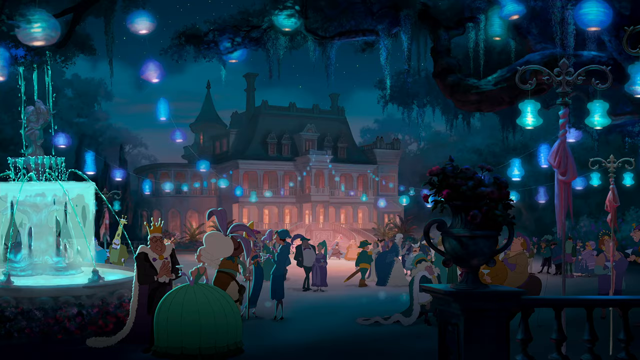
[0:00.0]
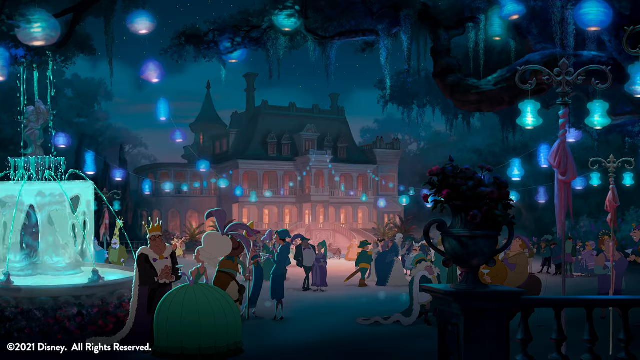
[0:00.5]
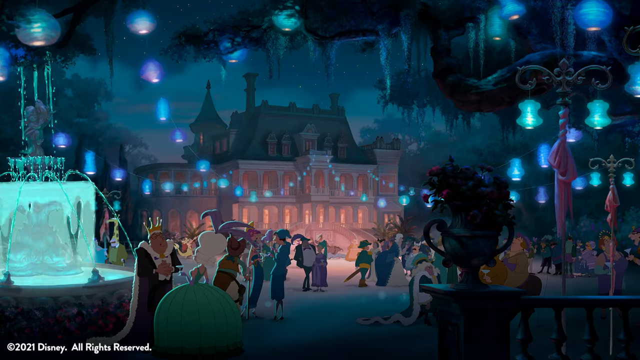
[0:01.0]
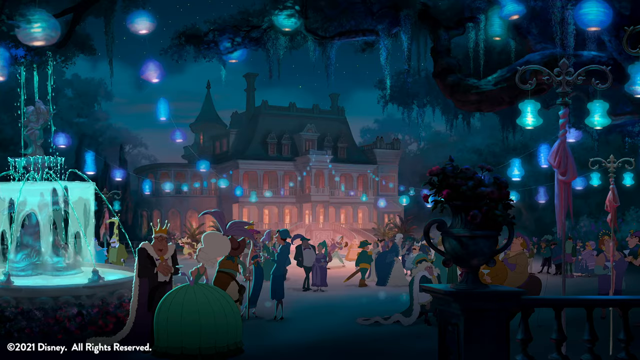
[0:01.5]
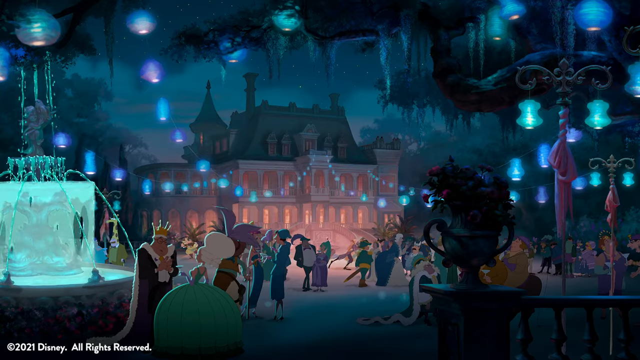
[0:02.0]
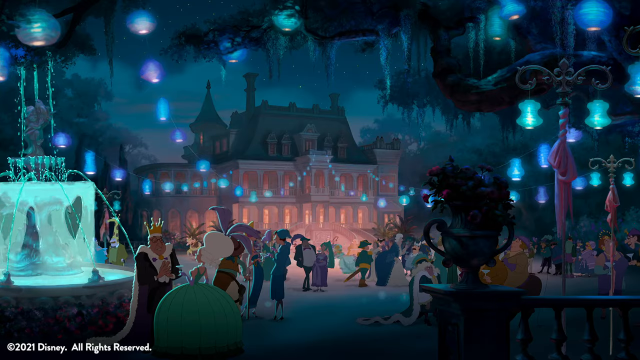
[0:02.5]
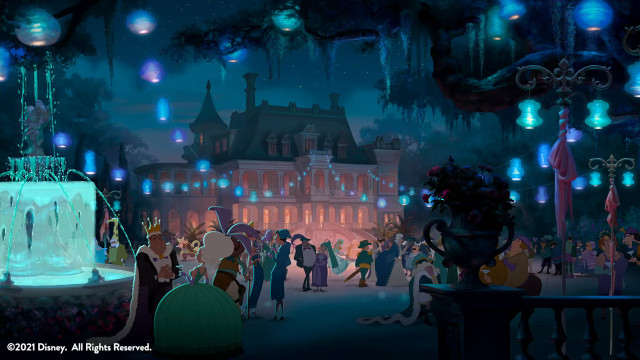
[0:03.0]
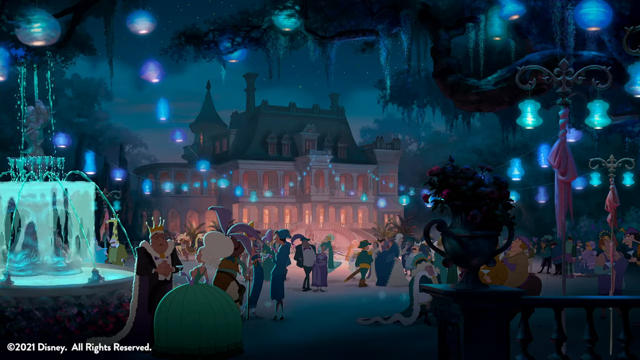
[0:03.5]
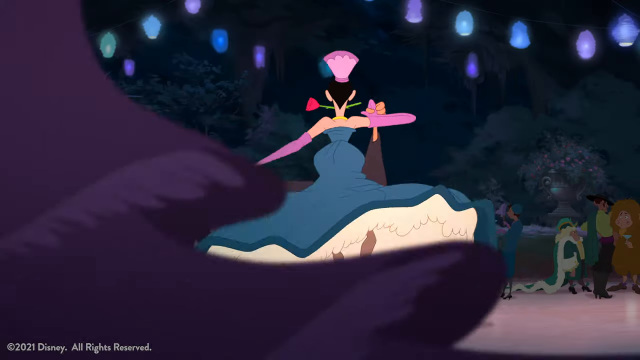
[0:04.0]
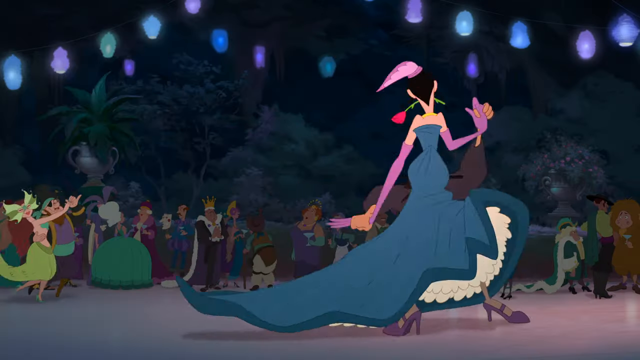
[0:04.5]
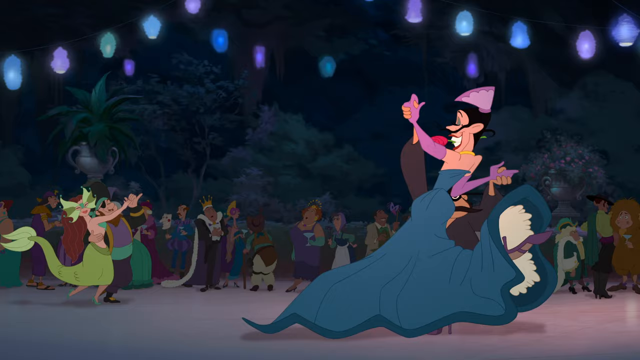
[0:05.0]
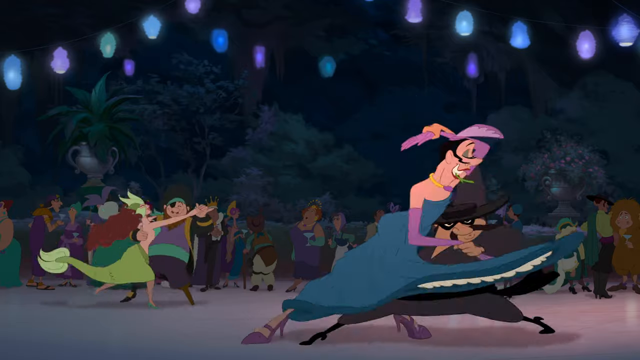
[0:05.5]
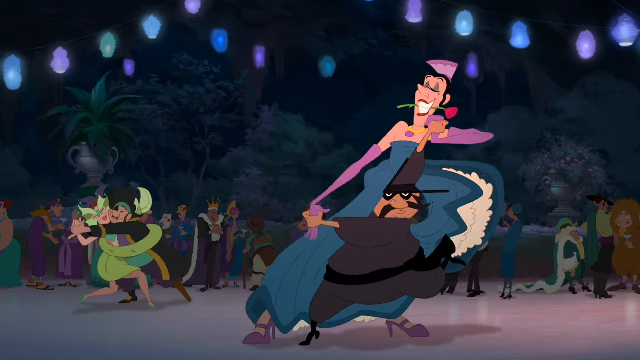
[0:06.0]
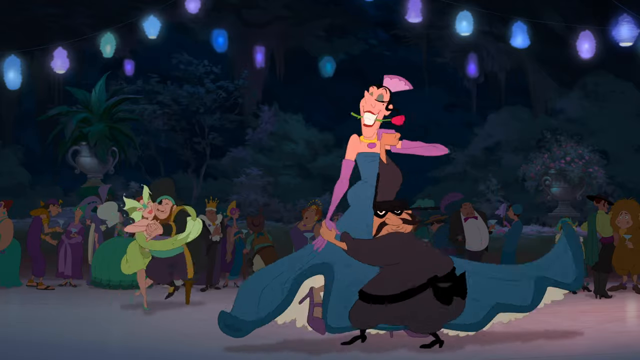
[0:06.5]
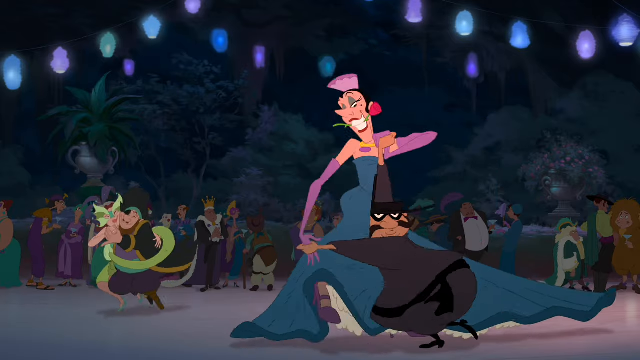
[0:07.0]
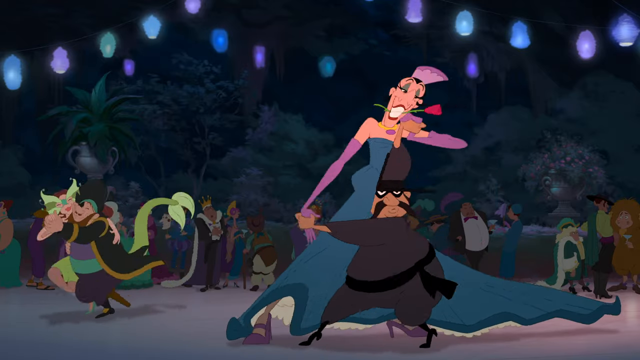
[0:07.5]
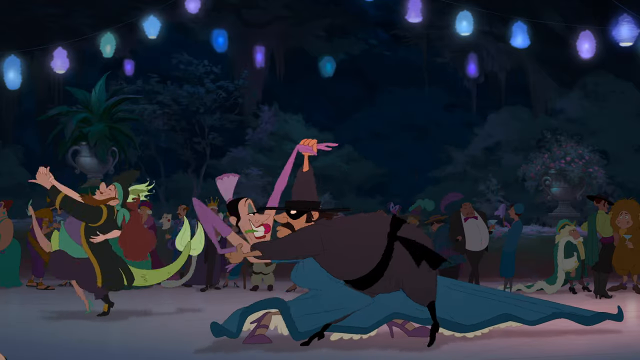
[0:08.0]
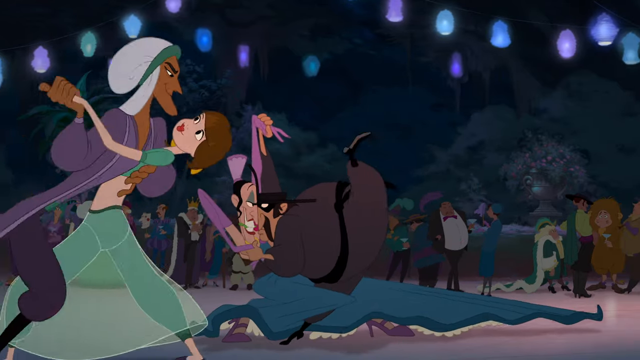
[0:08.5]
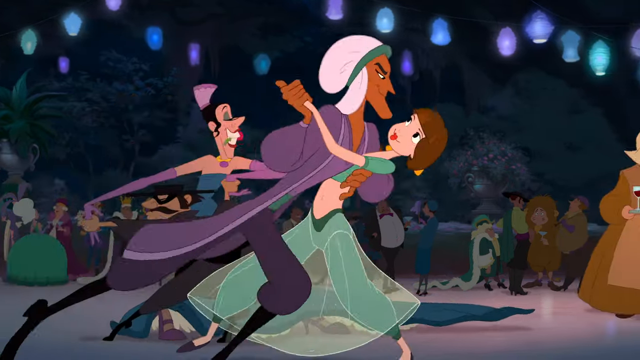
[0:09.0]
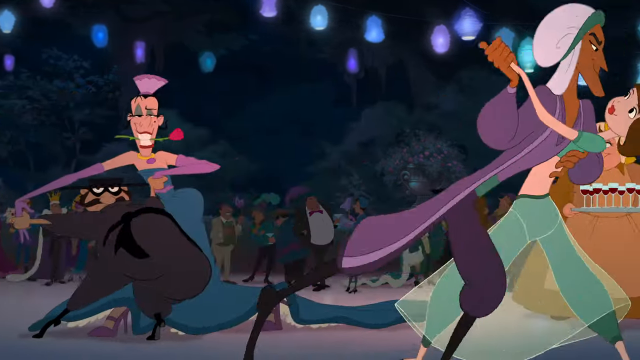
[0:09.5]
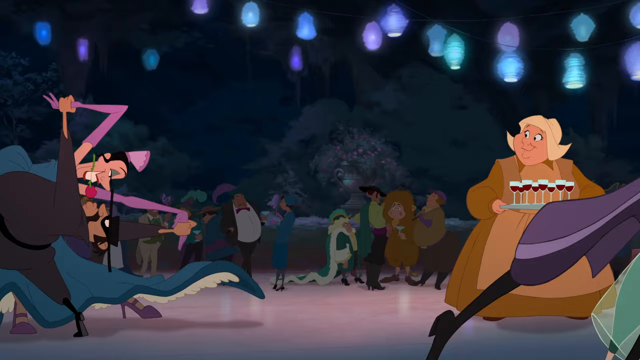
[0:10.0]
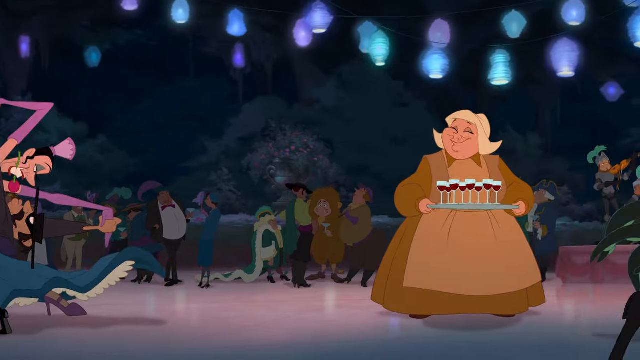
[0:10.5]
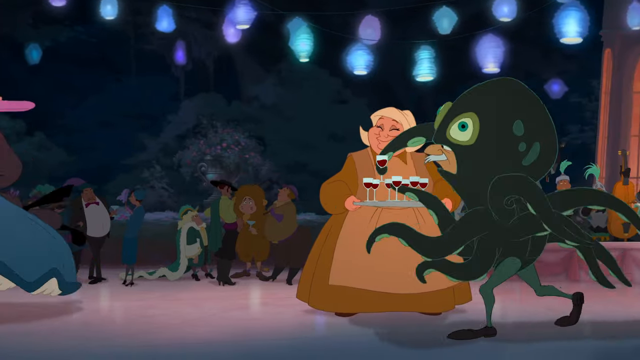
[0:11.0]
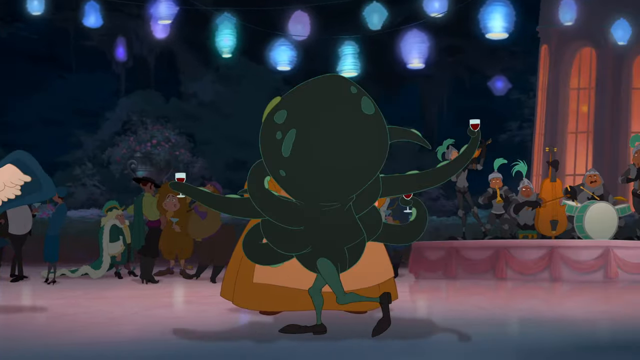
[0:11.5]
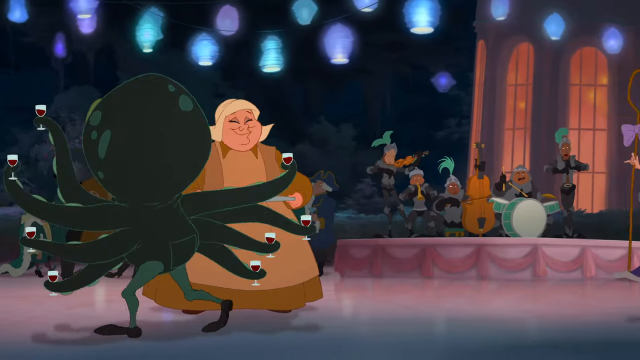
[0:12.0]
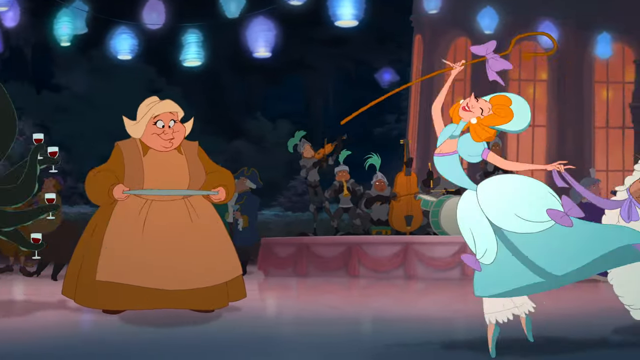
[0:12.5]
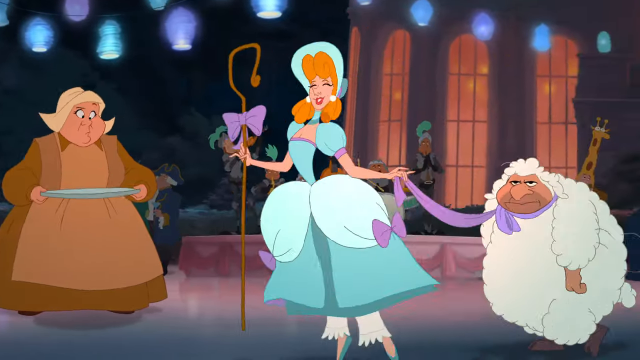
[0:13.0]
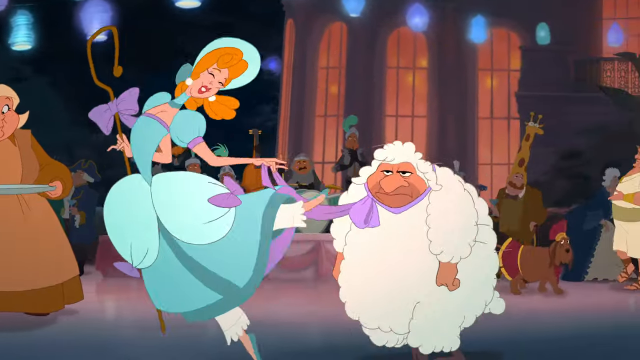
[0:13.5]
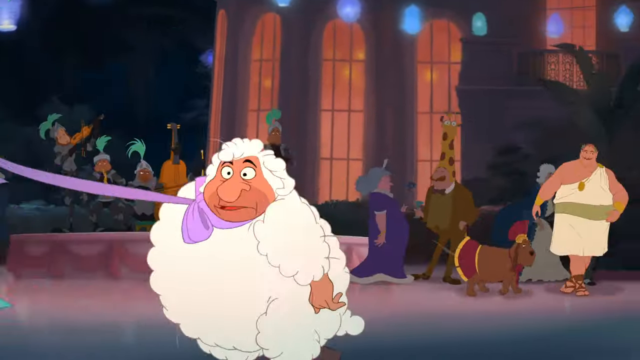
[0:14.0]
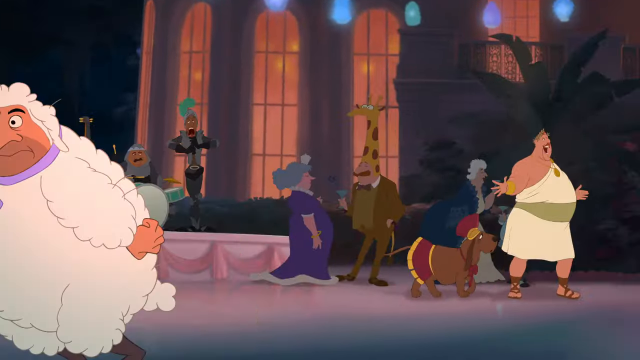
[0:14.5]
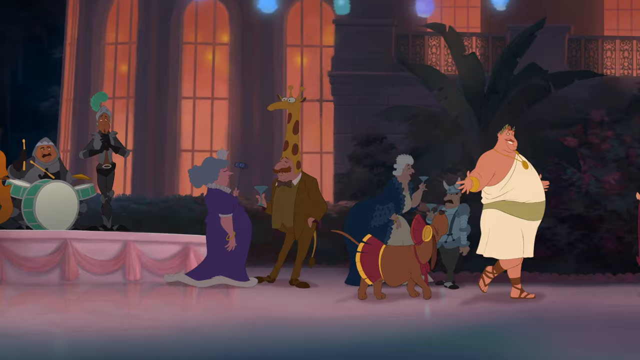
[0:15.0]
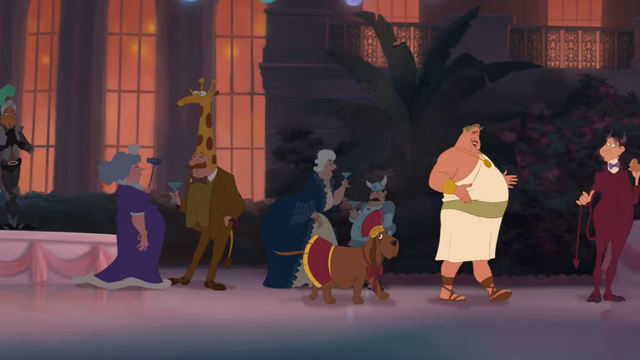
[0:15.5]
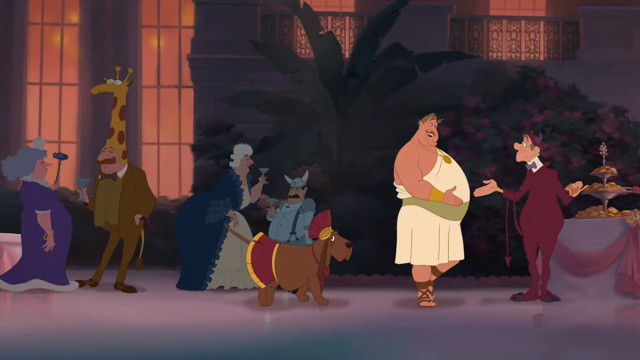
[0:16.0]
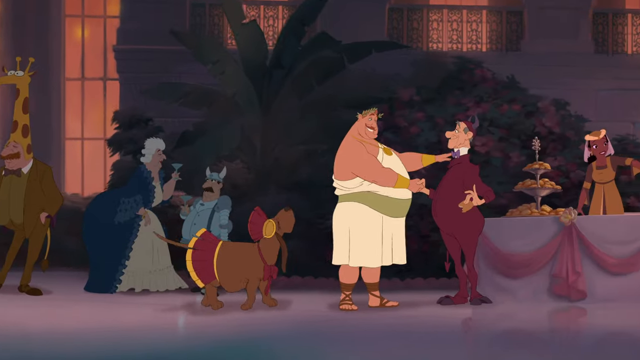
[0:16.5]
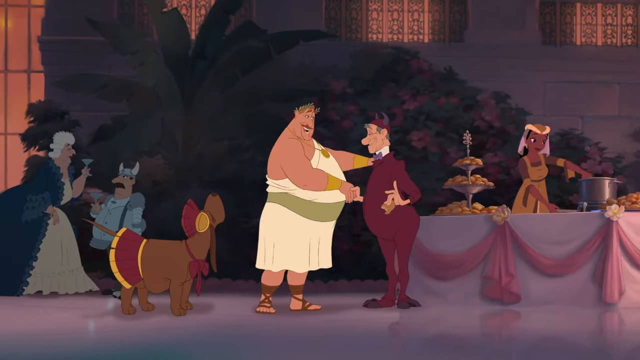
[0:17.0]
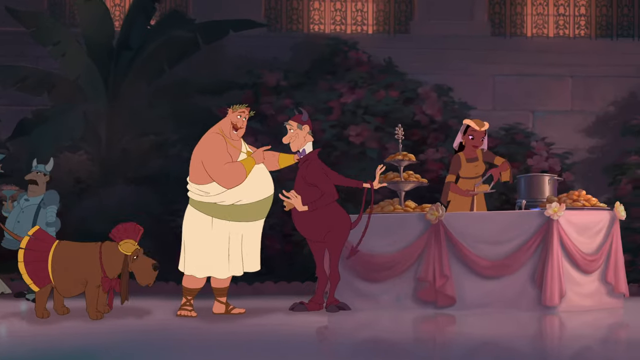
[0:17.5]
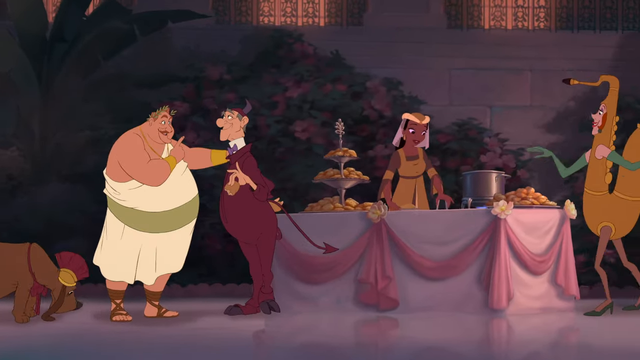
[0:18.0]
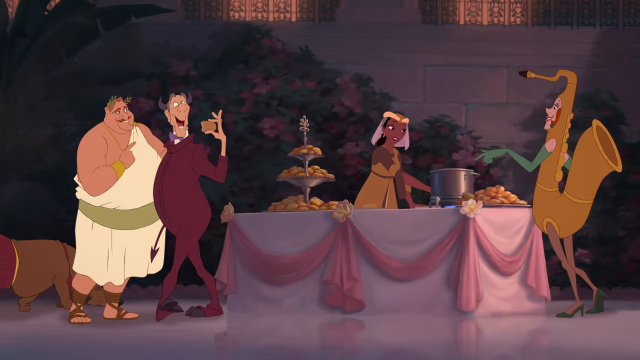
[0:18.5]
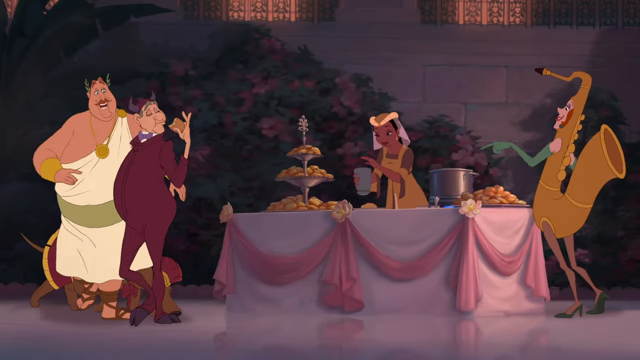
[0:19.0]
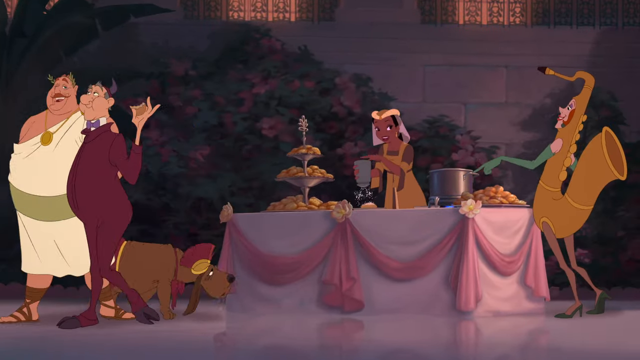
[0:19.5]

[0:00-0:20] An animated scene takes place at night. A large mansion stands in the background, with blue string lights made of lanterns running from the mansion forward toward the viewer. A number of people are milling about, and off in the distance a couple is dancing; a Cinderella-like dress suggests that era. To the left of the screen is a fountain with running water. After a transition, a woman with dark hair, a pink headdress and a long blue ball gown with white ruffles underneath appears, with a dragon off to her left. The woman is very tall and thin, and she dances with a much shorter, very overweight man with dark eyes. The dragon, somewhat off to their left, is dancing as well. The short man dips the tall woman, and then what looks like a sheik comes by with a woman in an outfit sort of like Jasmine's from Aladdin, with harem pants. The view pans to the right, showing a very large, short woman with blonde hair in a plain brown dress with an apron, as an octopus floats by her. Next comes what looks to be Bo Peep, with a short man dressed as a sheep. Still scrolling across the party, the view shows a man in a toga talking to a man in a suit and top hat, while a woman behind them serves drinks at what looks to be a dessert table and a saxophone walks up to get a drink.